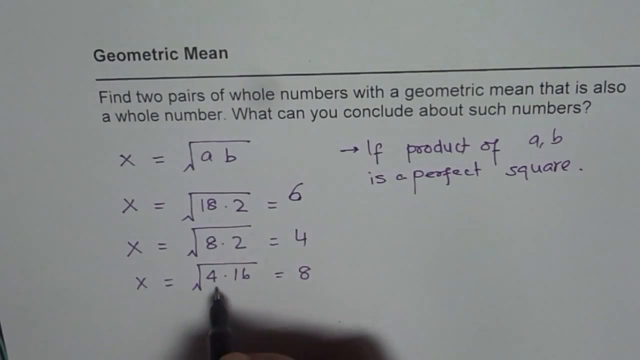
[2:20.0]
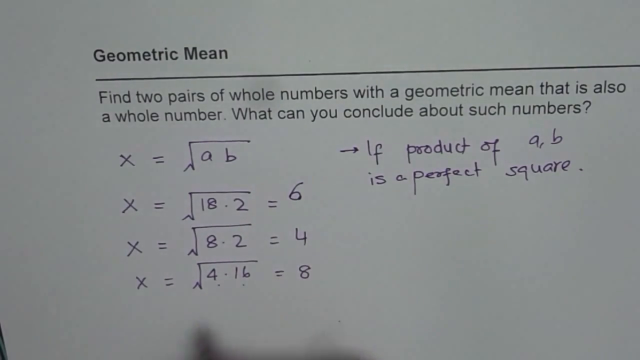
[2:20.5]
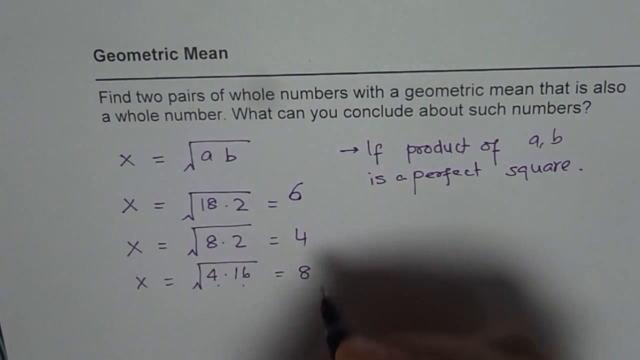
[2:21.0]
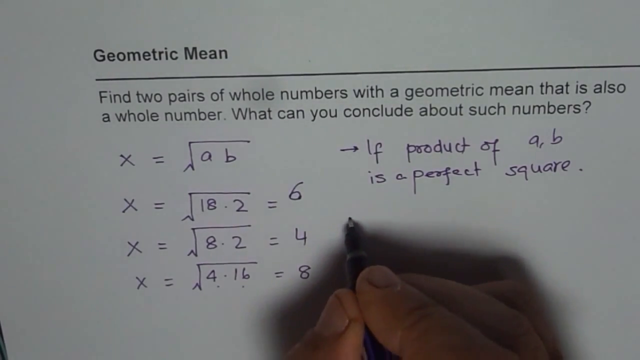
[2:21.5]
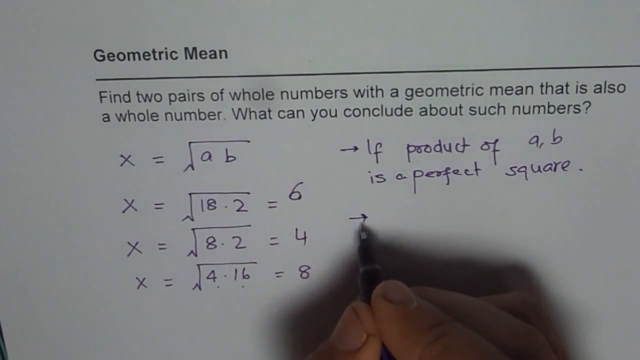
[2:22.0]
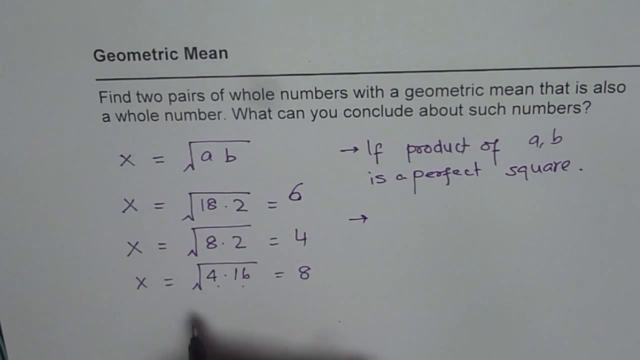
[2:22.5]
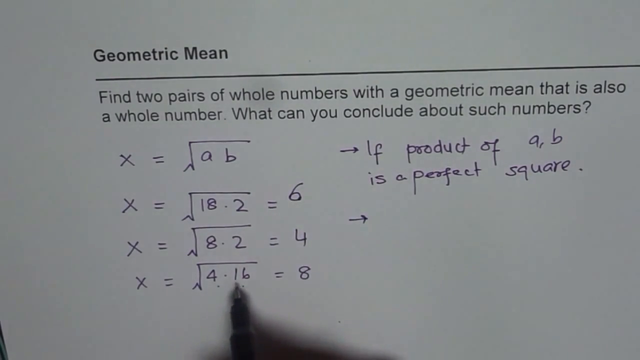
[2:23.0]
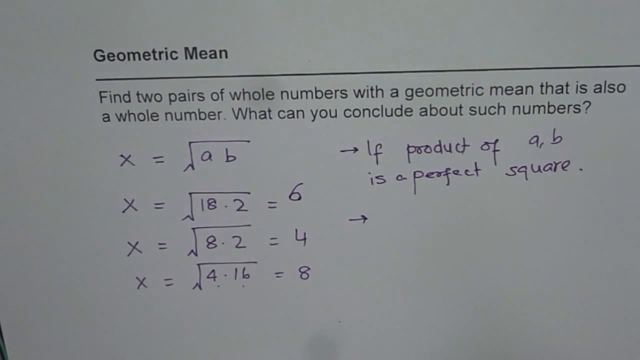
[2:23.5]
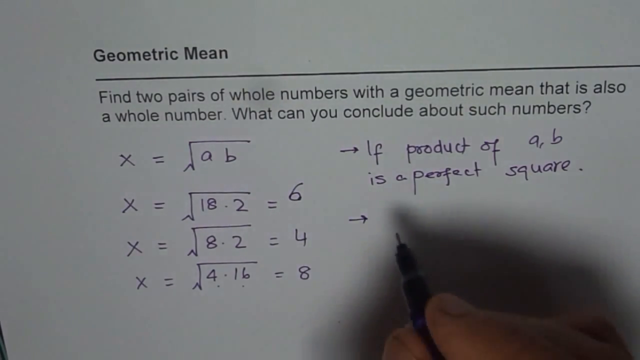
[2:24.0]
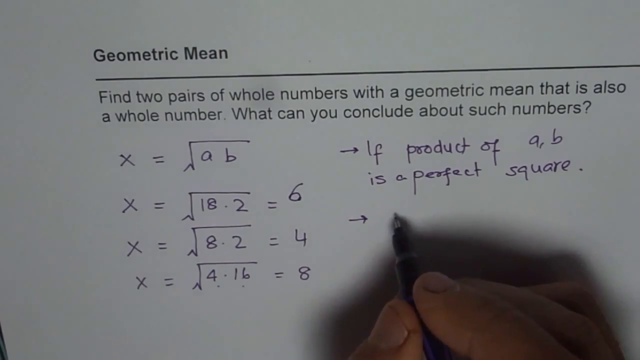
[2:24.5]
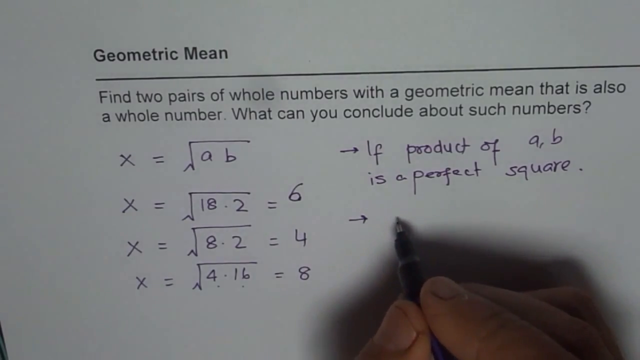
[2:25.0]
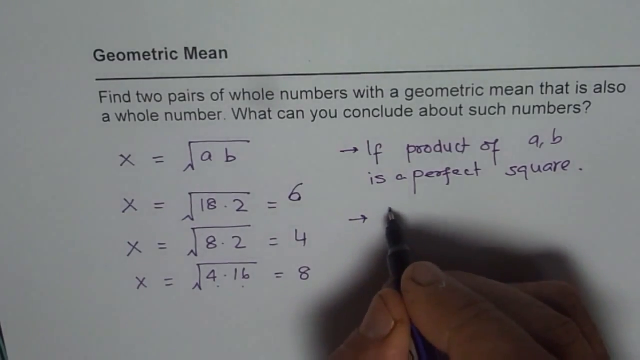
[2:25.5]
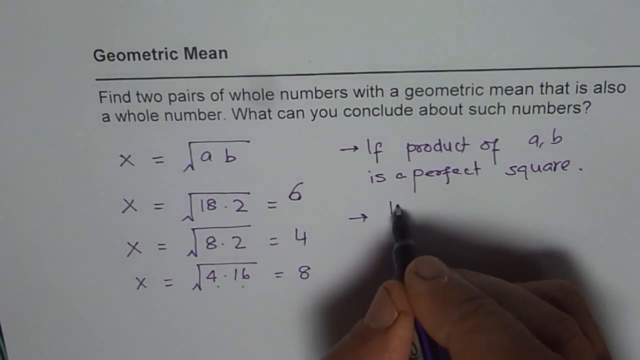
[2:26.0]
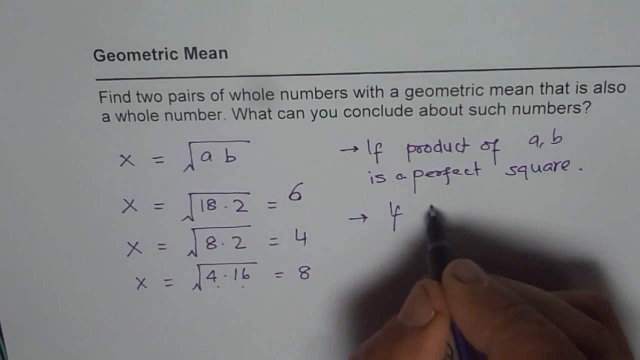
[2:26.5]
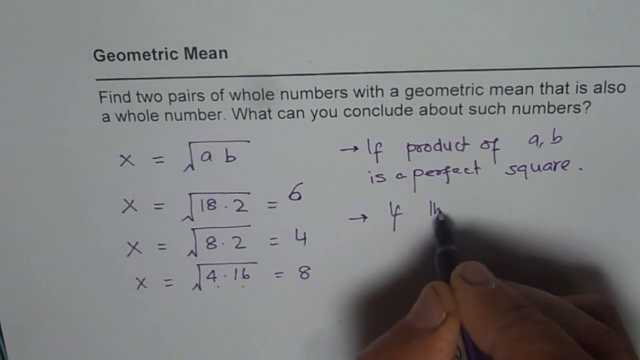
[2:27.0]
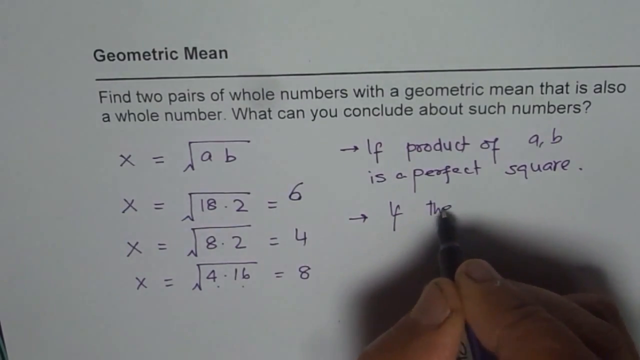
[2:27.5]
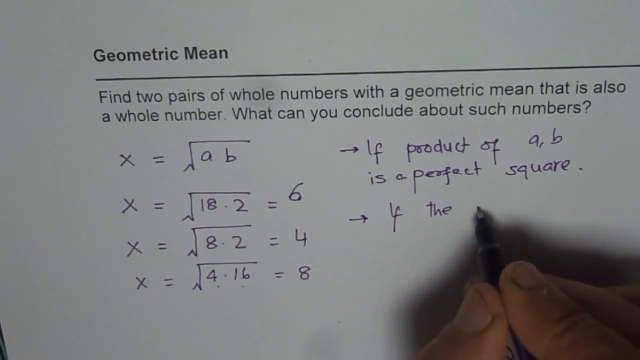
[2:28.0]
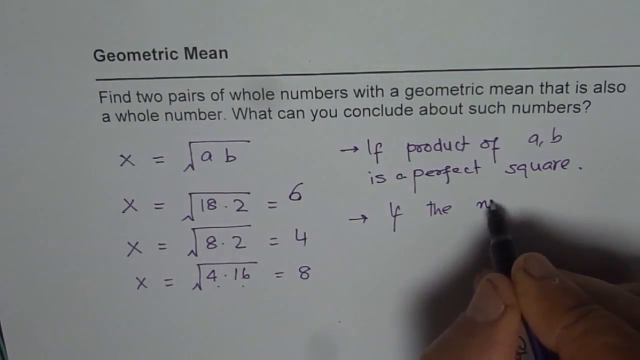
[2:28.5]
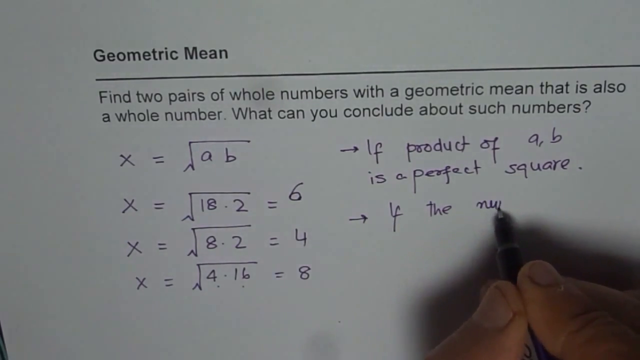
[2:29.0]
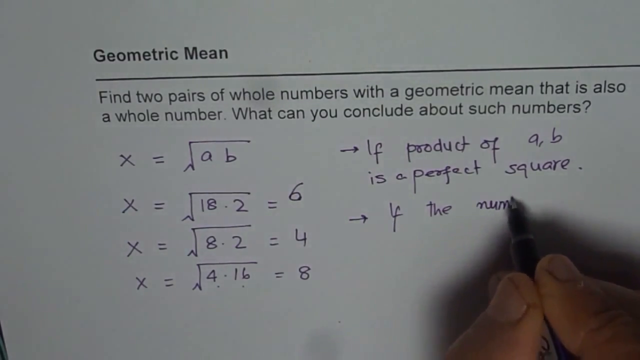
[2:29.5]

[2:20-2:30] The man, holding the pen in his right hand, taps under the 4 in the 16, leaving clear marks on the paper. He moves his hand up the page to the right and draws a small arrow under the words "if product of A and B is a perfect square"; the arrow lines up with the arrow in front of the word "if" in those words. He goes back down and starts to tap under the number 4, then taps under the number 16, pulls the pen off the paper quickly to the right, brings it back, and begins to write in neat but cramped writing "if the number".